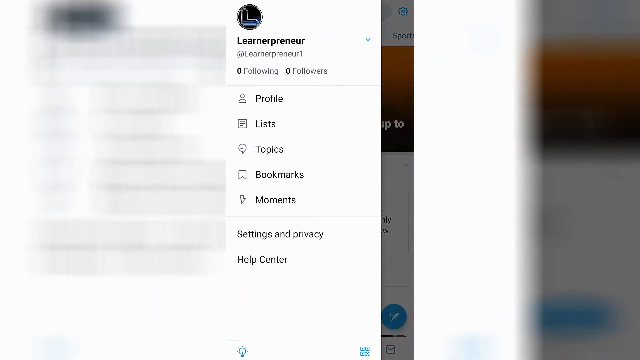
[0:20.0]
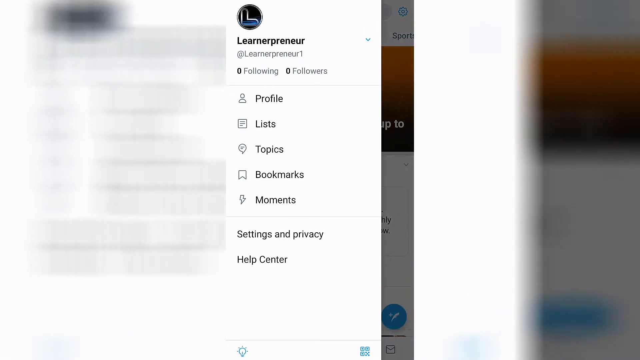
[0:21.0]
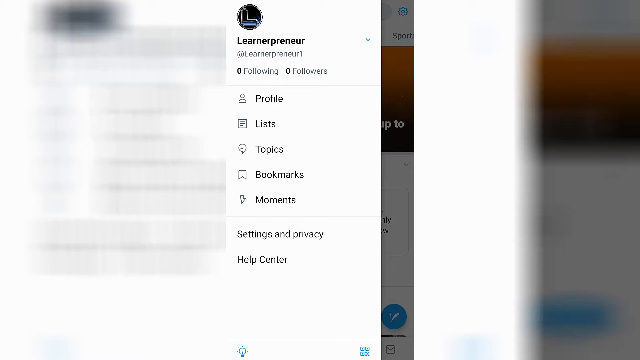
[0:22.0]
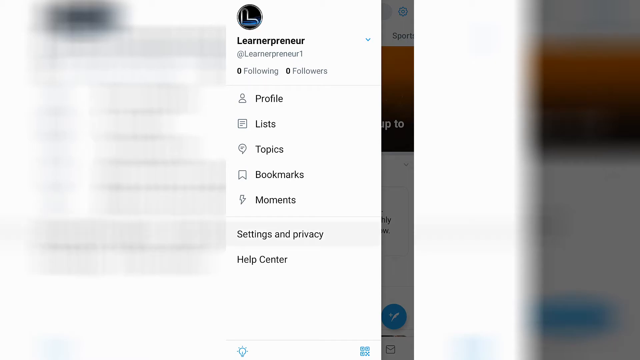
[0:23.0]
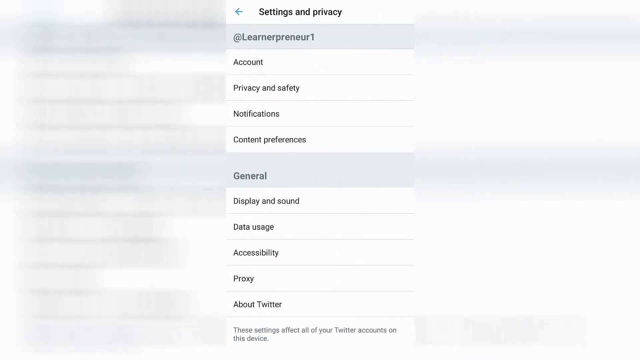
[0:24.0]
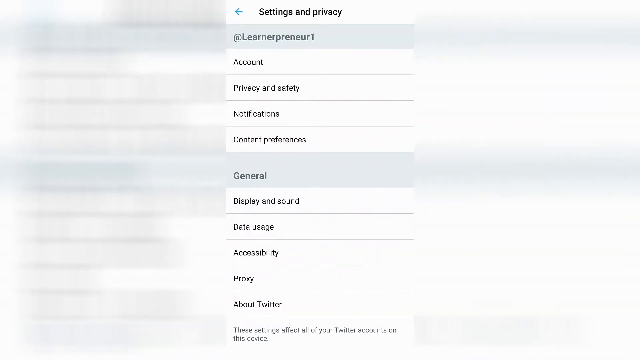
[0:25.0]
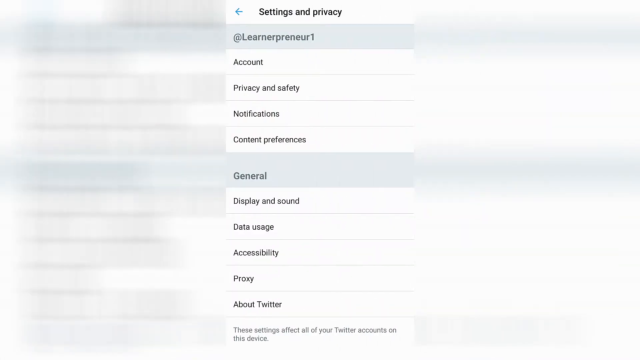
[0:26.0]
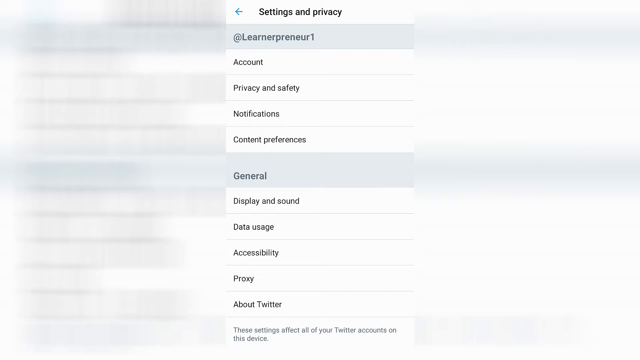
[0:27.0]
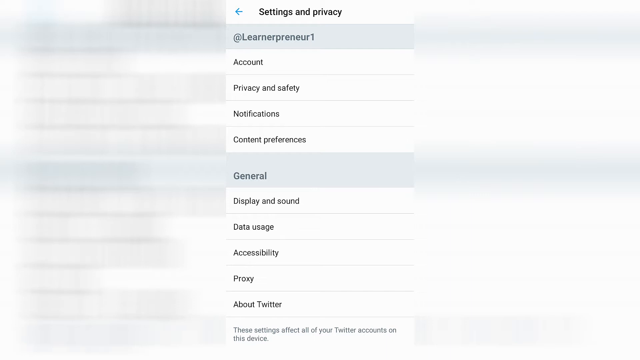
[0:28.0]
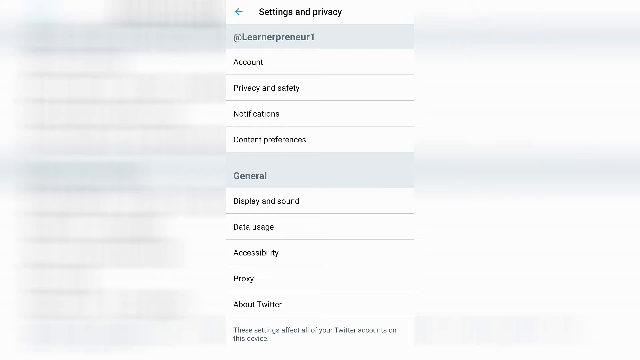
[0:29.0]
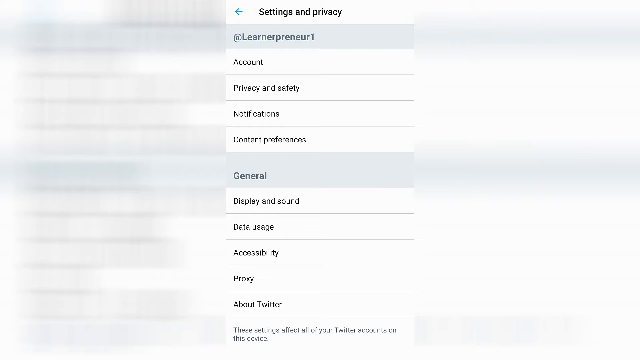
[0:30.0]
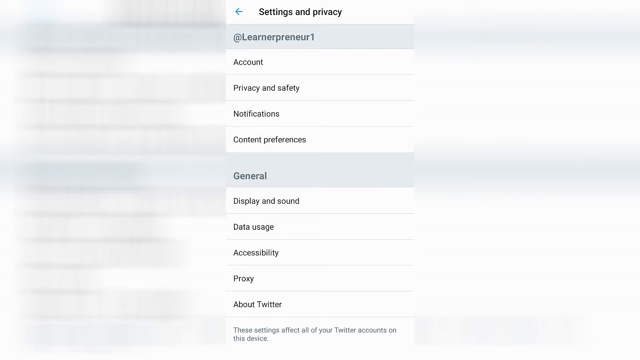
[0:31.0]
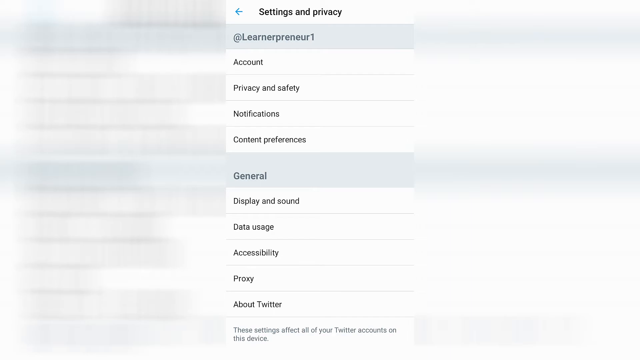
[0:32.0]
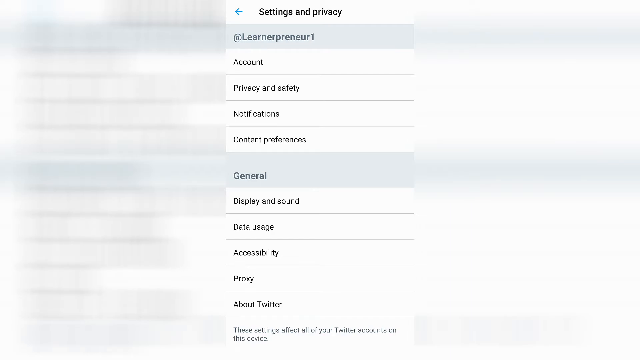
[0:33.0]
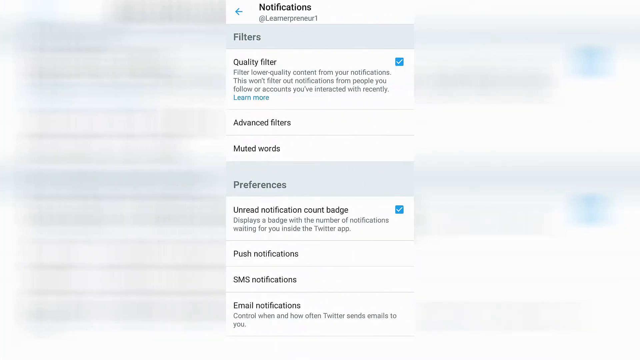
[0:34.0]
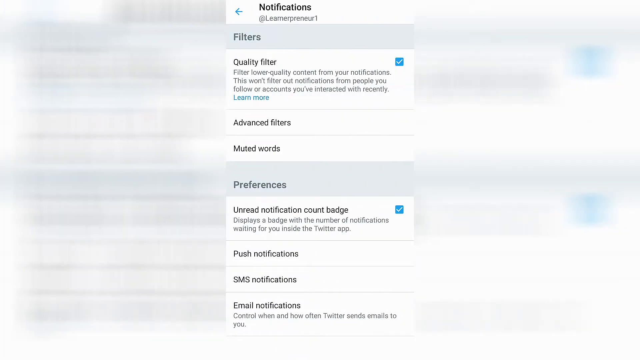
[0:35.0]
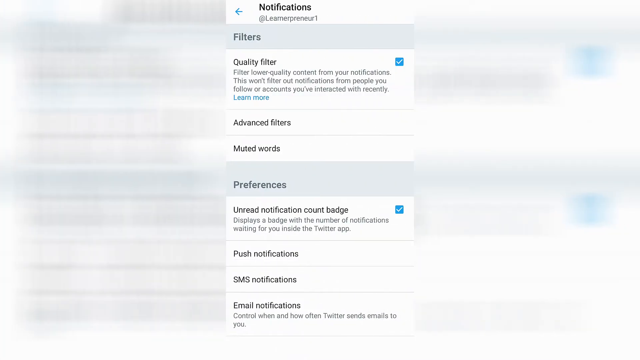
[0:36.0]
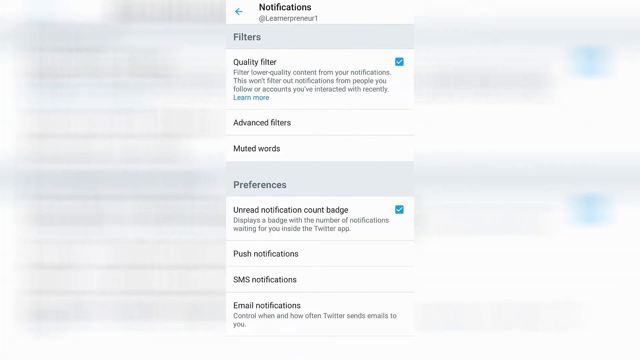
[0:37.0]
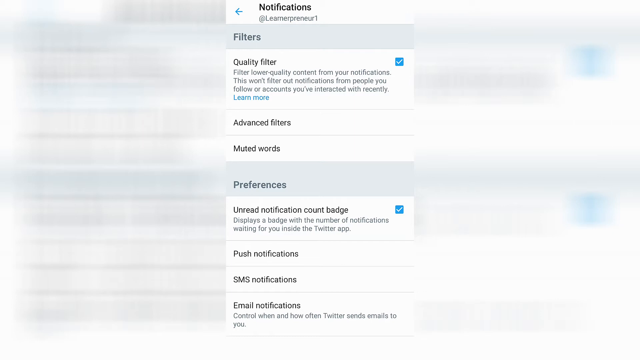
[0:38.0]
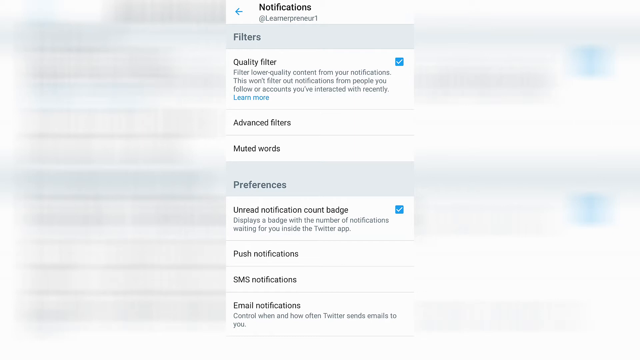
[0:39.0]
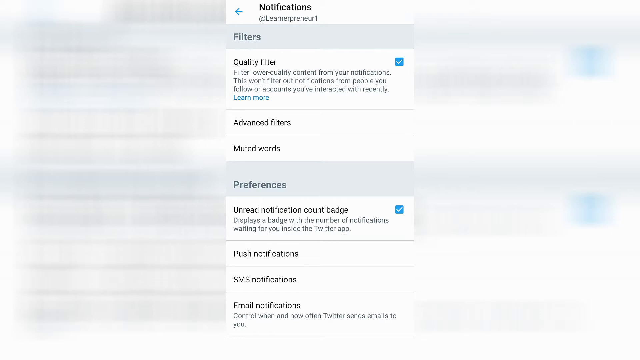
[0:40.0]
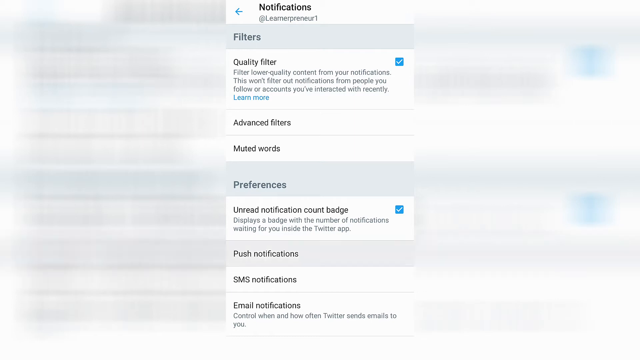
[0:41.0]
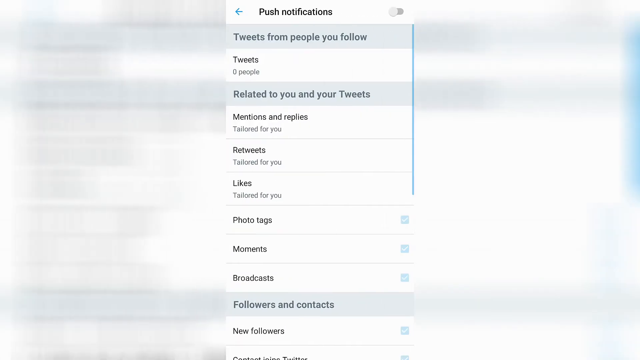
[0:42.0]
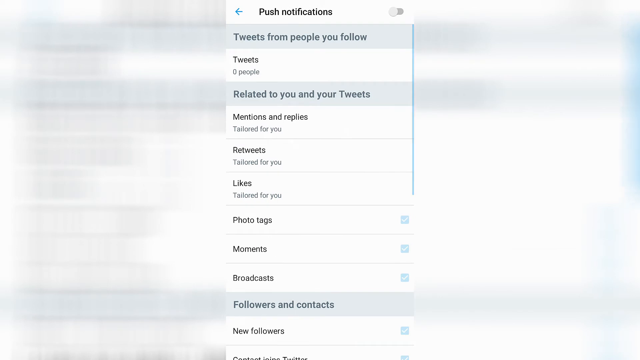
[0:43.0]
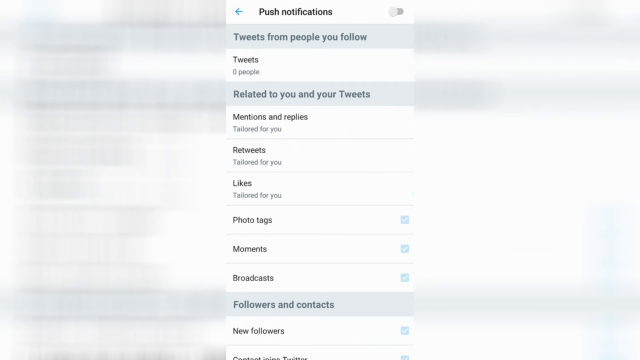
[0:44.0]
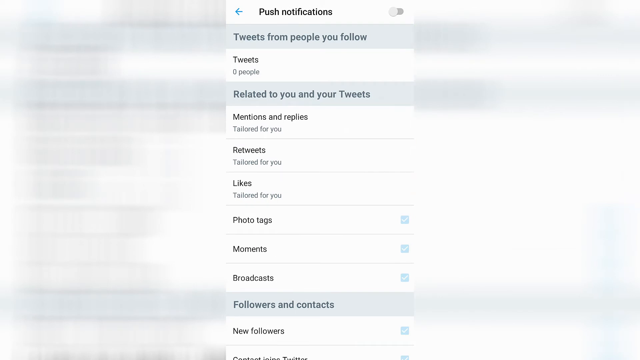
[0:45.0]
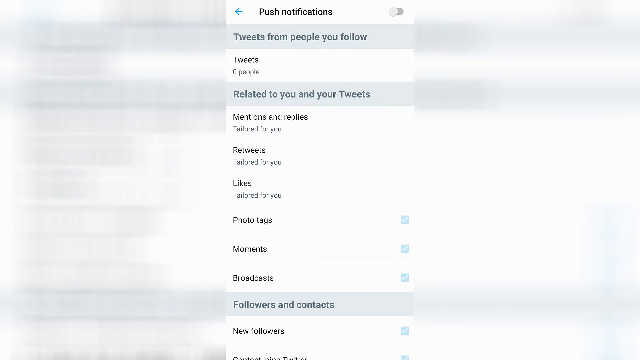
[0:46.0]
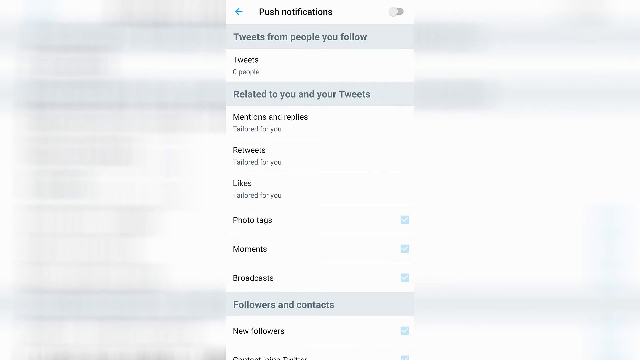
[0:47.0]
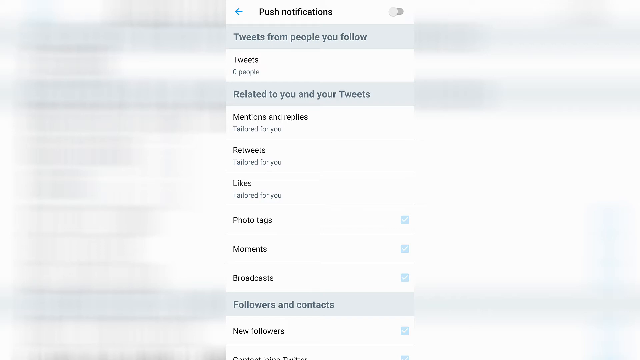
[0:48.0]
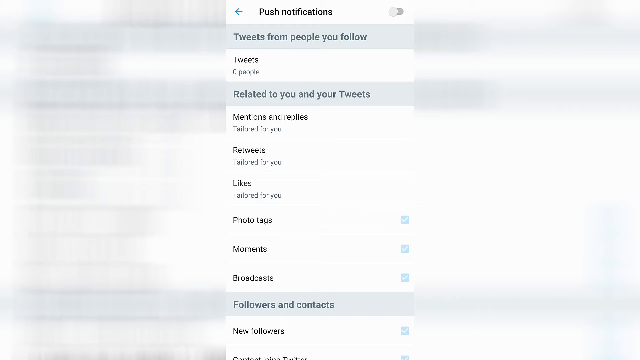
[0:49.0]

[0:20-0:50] The Learnerpreneur sidebar stays on screen for a while, then slides to the left as the Settings and Privacy screen slides in from the right. At the top is a small blue arrow and the heading "Settings and privacy." Below, a gray bar shows "@Learnerpreneur1" in dark gray text on the left. The list continues in white with "Account," a small gray line, "Privacy and safety," a line, "Notifications," a line, and "Content preferences." Another gray bar has gray text at its bottom left reading "General," and beneath it, in white, are "Display and sound," "Data usage," "Accessibility," "Proxy," and "About Twitter," separated by lines, followed by "These settings affect all of your Twitter accounts on this device." This holds for a few seconds, then the Notifications page slides in from the right. It has a blue back arrow on the upper right, the word "Notifications" in bold black, and "Learnerpreneur1" underneath. A gray bar with gray text on the left says "Filters." Below, in white, is "Quality filter" with a blue checked box with a white check mark on the far right, and beneath it "Filter low-quality content from your notifications. This won't filter out notifications from people you follow or accounts you've interacted with recently." Under that is "Learn more" in blue, then a line, "Advanced filters," another line, and "Muted words." A gray bar with the gray text "Preferences" in its lower right follows, and the list continues in white with "Unread notification count badge" and the same blue checked box, with "Displays a badge with the number of notifications awaiting for you inside the Twitter app" beneath it. Then come "Push notifications," "SMS notifications," and "Email notifications," separated by lines, with "Control when and how often Twitter sends emails to you." Next, the Push notifications page slides in from the right, with a slider button on the very right, a blue arrow on the upper left, and the words "Push notifications" to the right of the arrow. A gray bar reads "Tweets from people you follow," followed in white by "Tweets from zero people." Another gray bar reads "Related to you and your tweets" in dark gray, and the list continues in white: "Mentions and replies tailored for you," "Retweets tailored for you," a line, "Likes tailored for you," a line, "Photo tags" with a faded blue checkbox, a line, "Moments" with a faded blue checkbox on the right, a line, "Broadcasts," a line, a faded blue checkbox, a line, then "Followers and contacts" with "New followers" and a faded blue checkbox beneath it, and another line.